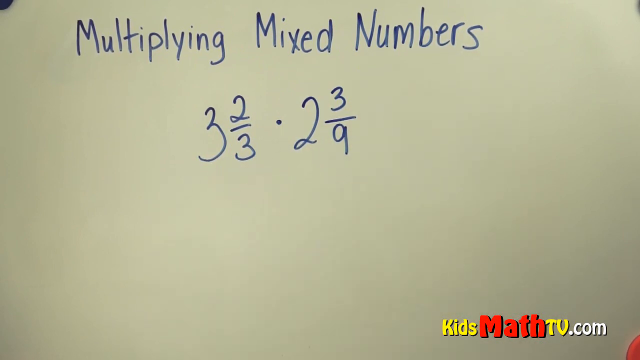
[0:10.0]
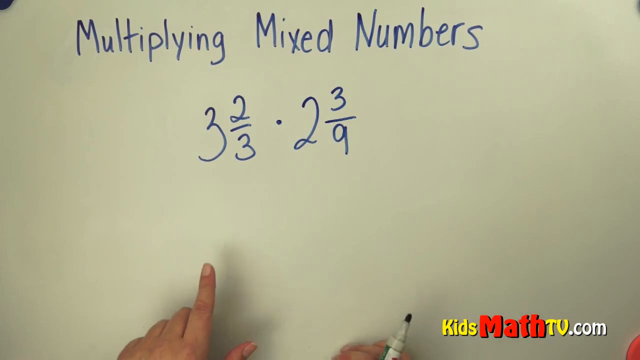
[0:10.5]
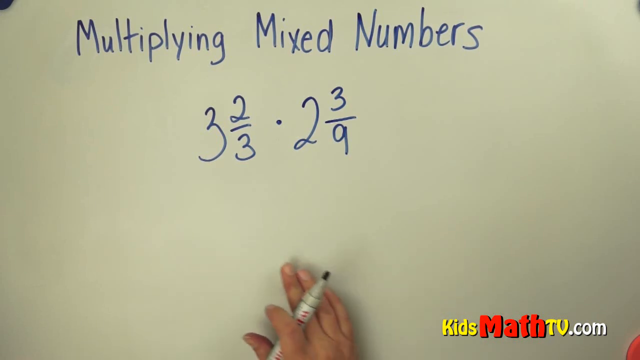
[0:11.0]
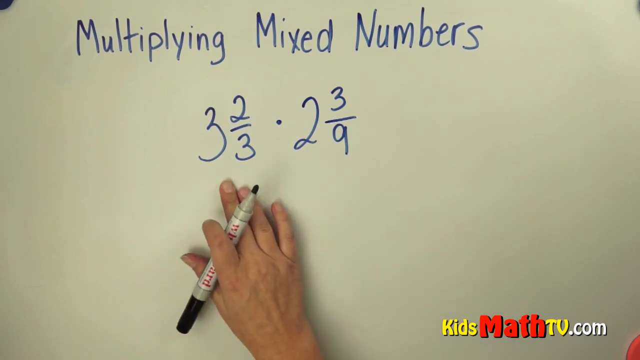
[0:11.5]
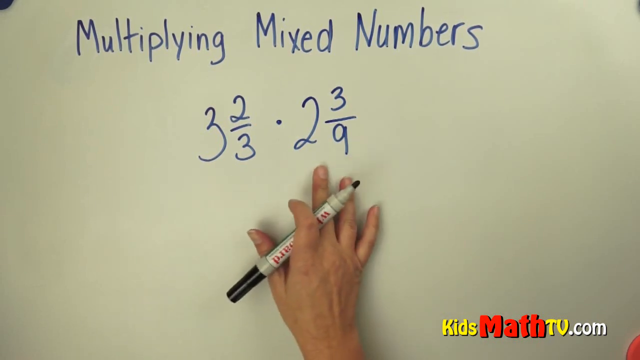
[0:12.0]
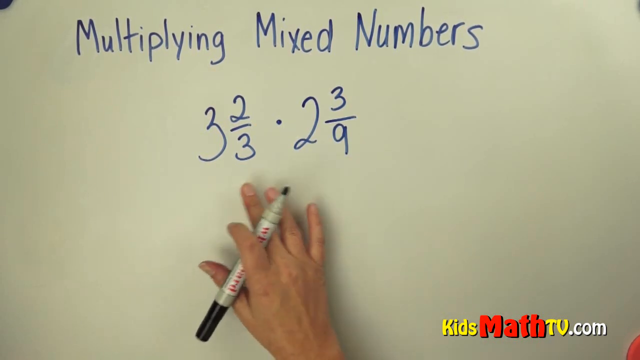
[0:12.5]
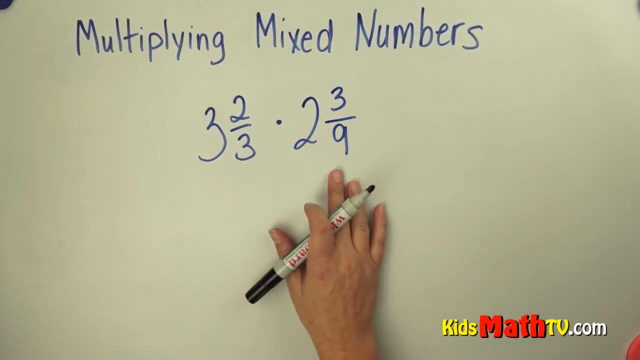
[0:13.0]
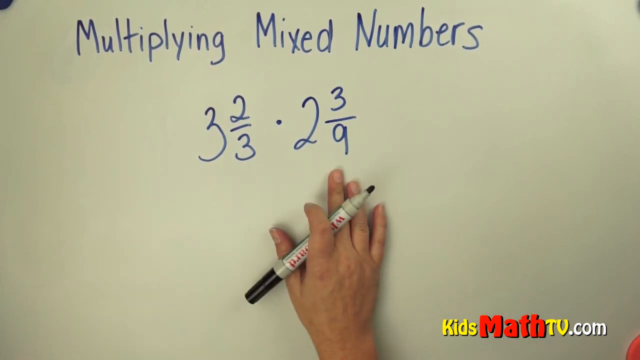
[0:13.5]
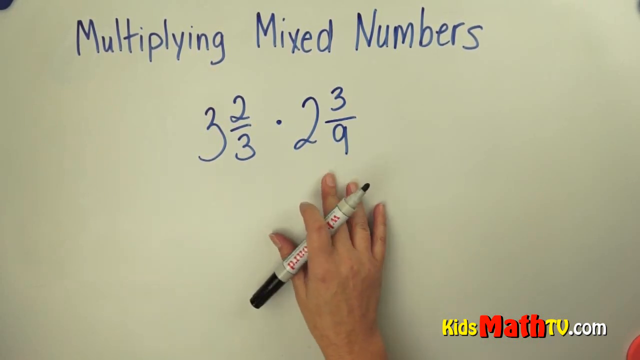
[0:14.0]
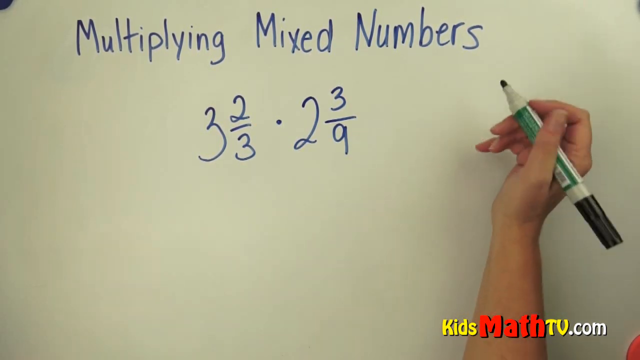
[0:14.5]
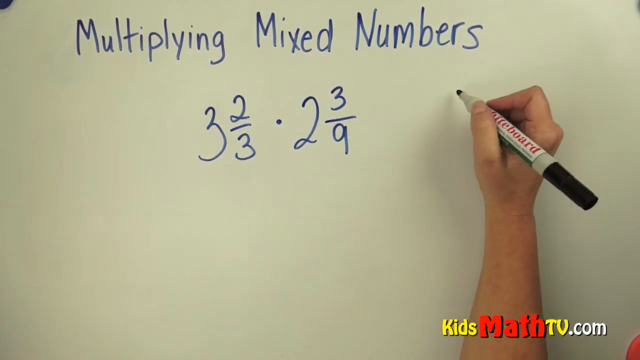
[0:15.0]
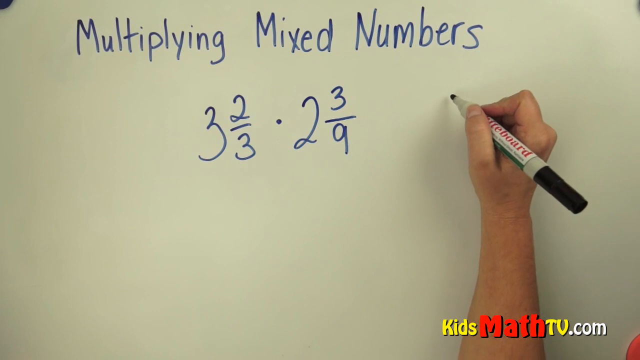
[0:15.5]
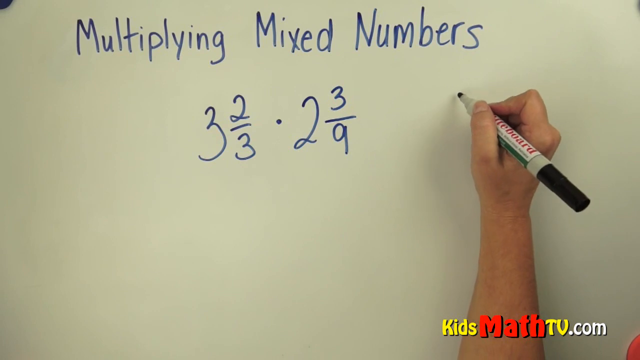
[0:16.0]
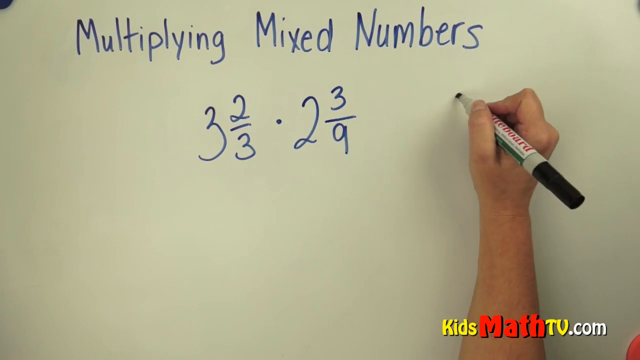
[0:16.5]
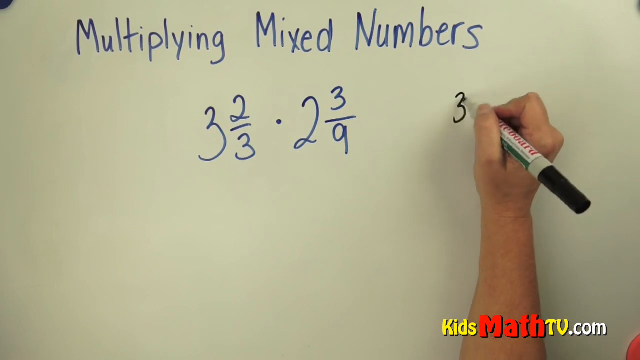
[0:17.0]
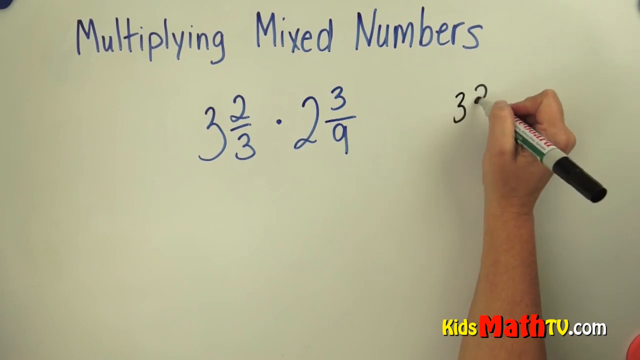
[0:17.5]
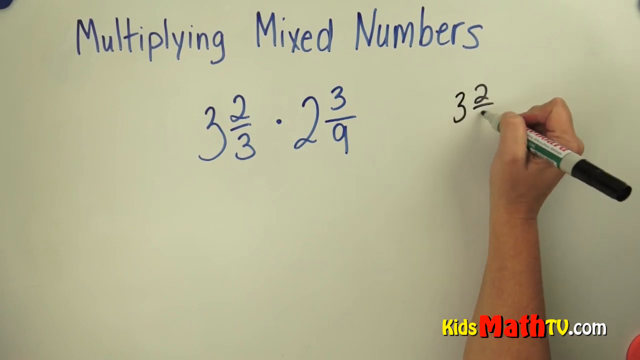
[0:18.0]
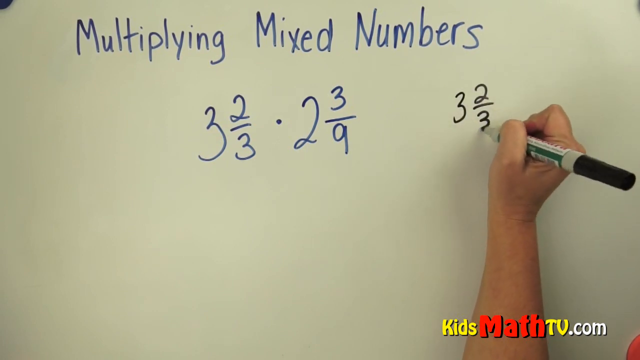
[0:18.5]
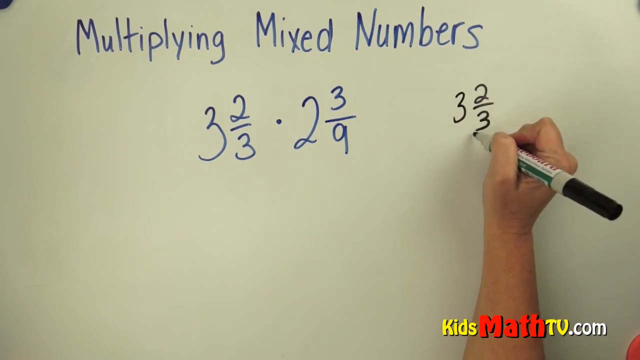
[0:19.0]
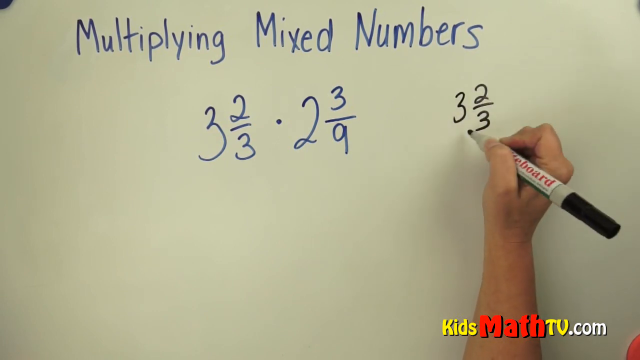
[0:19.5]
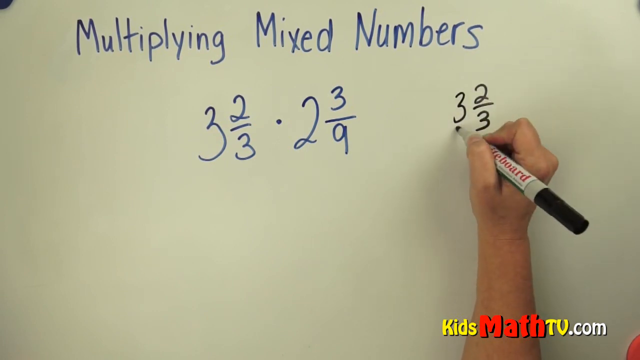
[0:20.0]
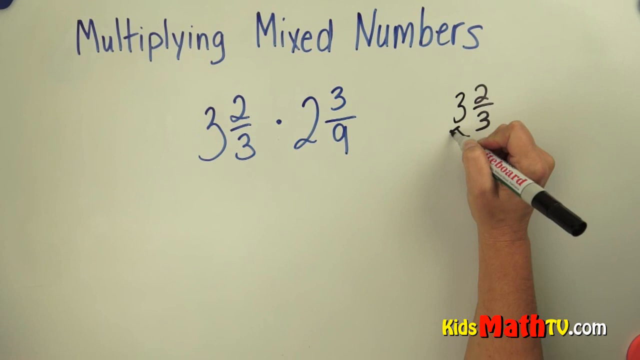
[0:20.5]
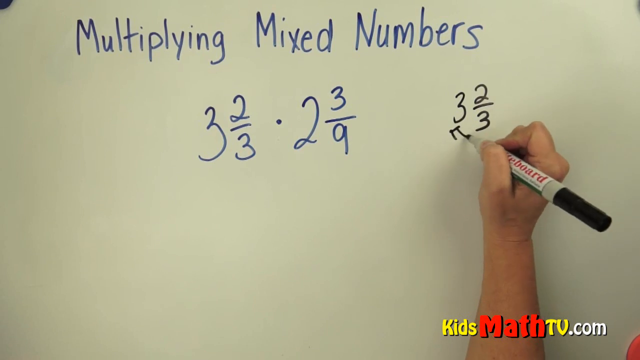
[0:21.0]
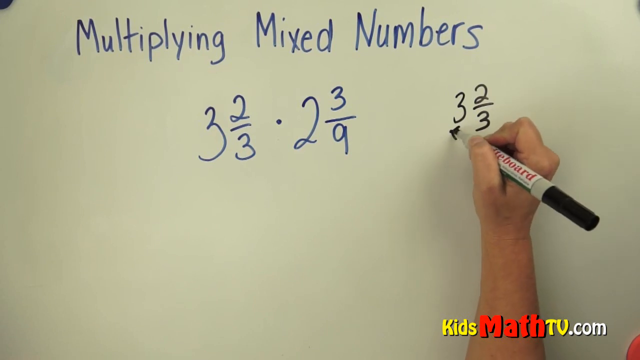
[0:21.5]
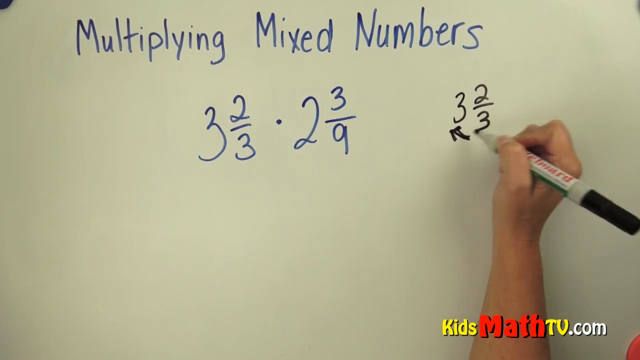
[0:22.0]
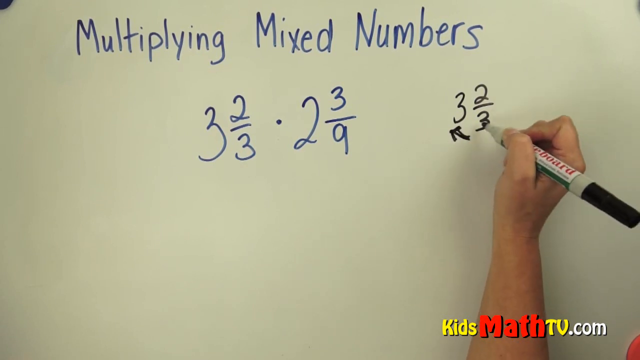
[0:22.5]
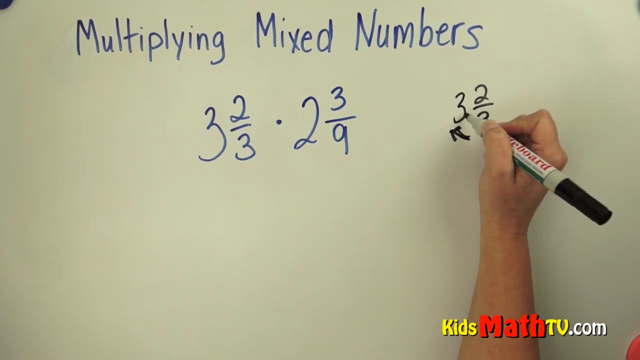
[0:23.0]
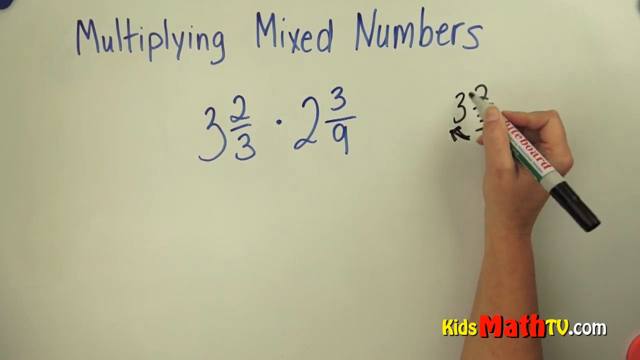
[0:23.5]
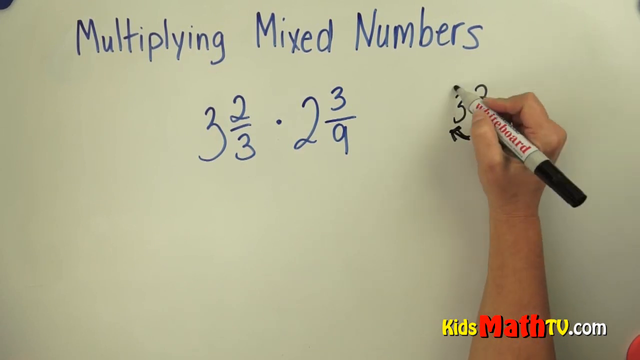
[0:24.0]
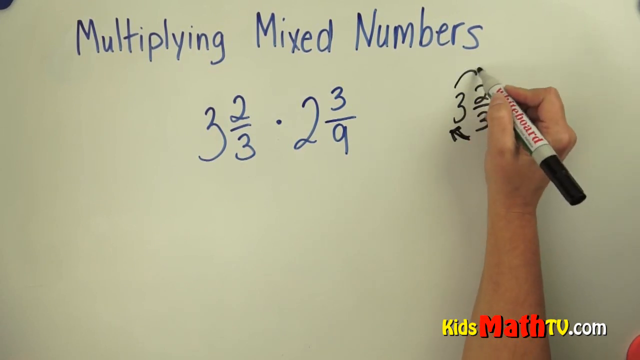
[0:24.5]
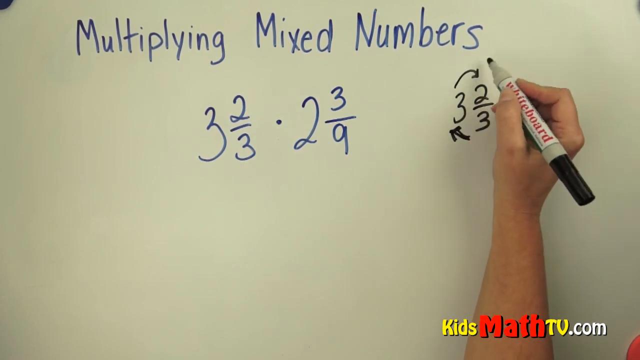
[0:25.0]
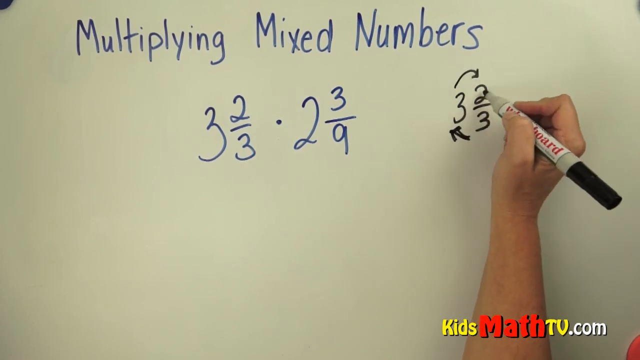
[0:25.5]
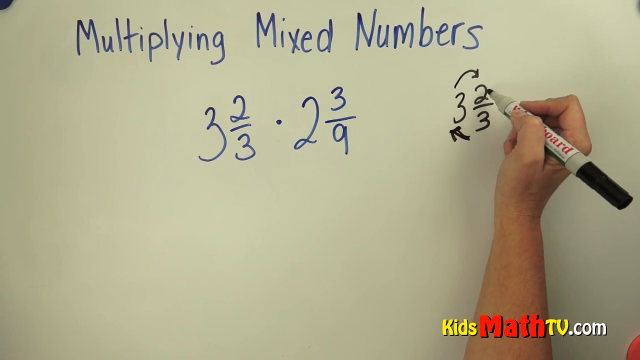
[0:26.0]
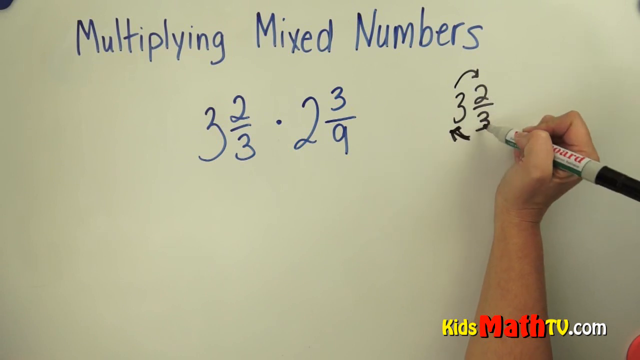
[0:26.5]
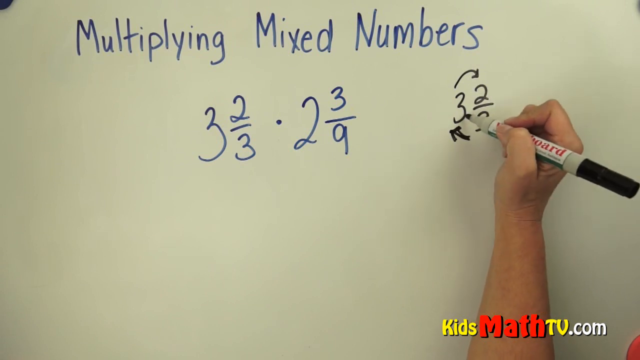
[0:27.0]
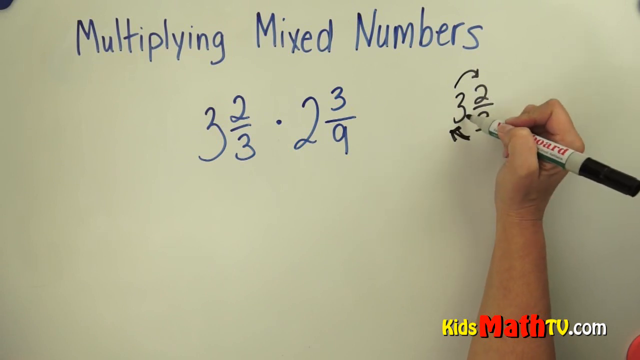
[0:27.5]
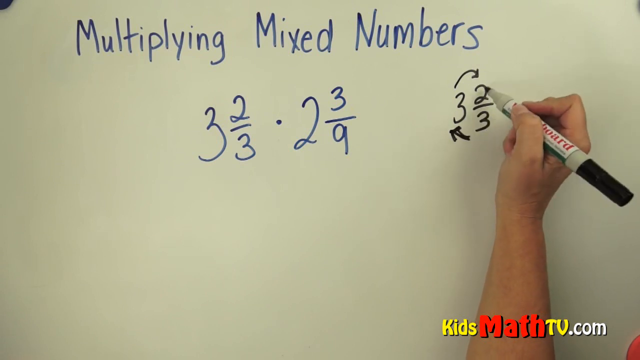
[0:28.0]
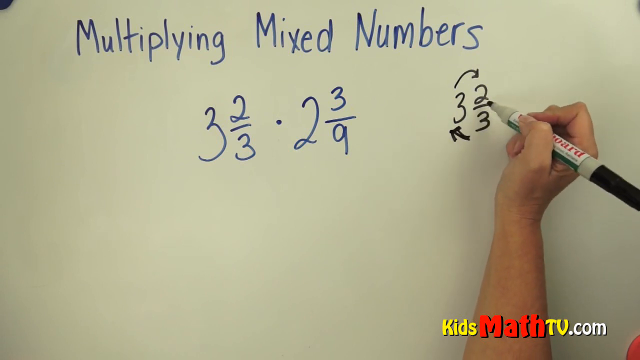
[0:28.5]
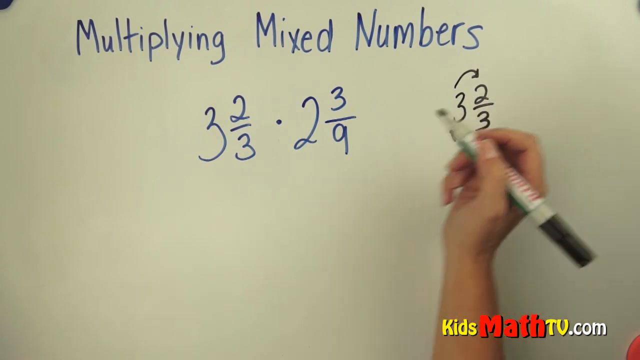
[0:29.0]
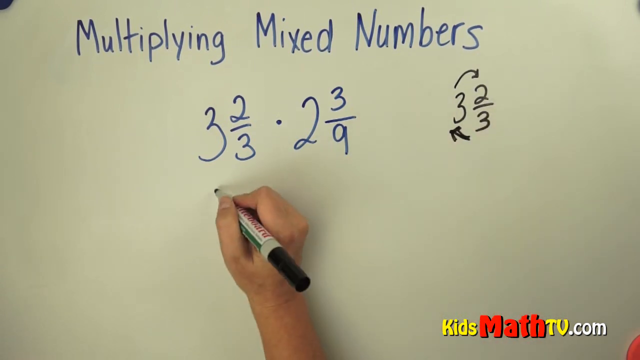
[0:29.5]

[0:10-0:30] A white background shows the text "Multiplying Mixed Numbers" in blue. Below it are two numbers: 3 and 2 thirds, followed by a blue dot, and then 2 and 3 ninths, indicating the tutorial will teach how to multiply them. A right hand enters from the bottom of the screen holding a black felt tip between the index finger and thumb, facing downward on the screen. The hand moves from one number to the other, indicating an explanation. It then moves to the right of the whiteboard and writes 3 and 2 thirds. An arrow is drawn between the 3 of the denominator and the whole number 3, and another between the whole number 3 and the numerator 2.